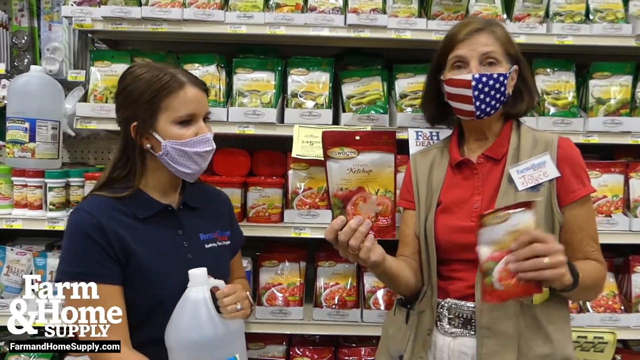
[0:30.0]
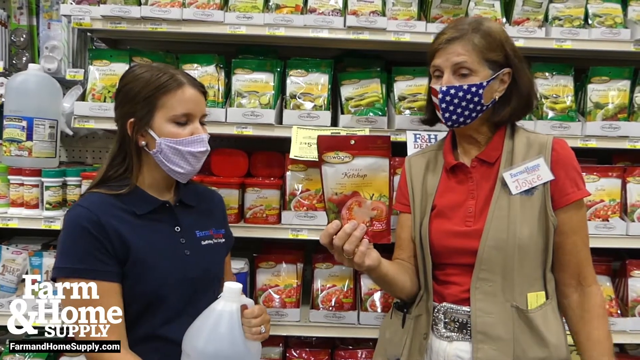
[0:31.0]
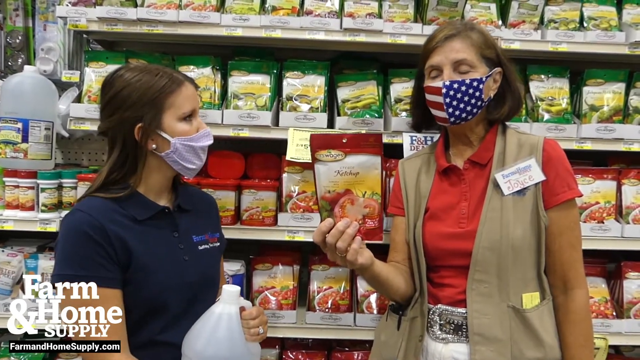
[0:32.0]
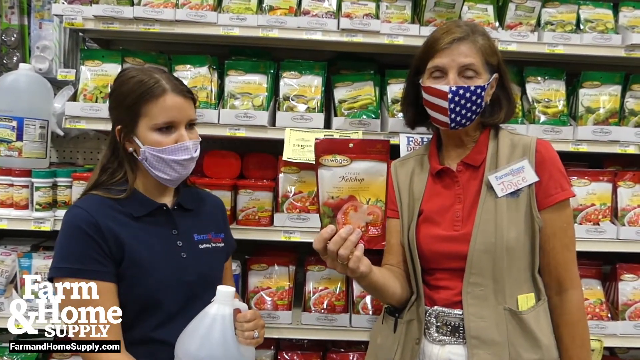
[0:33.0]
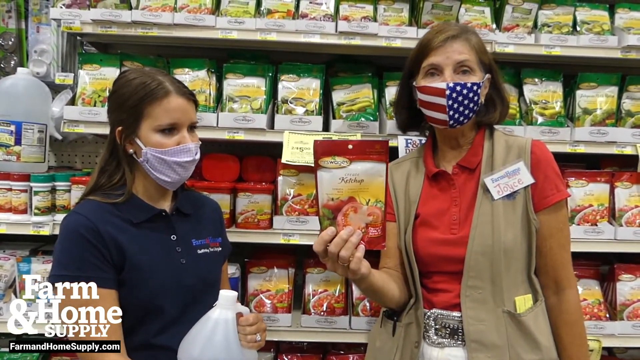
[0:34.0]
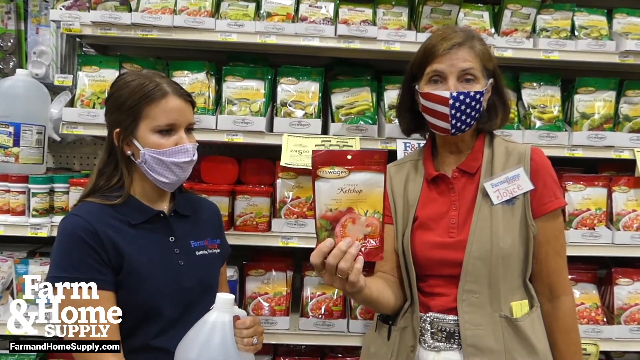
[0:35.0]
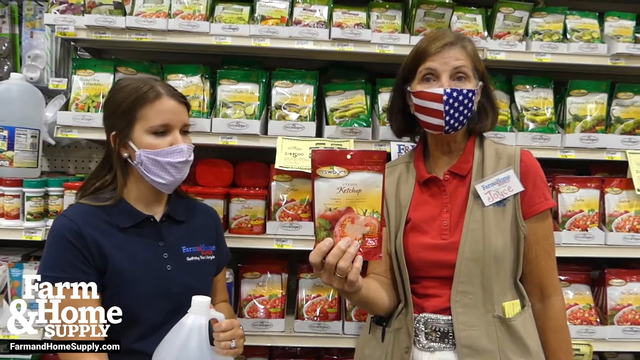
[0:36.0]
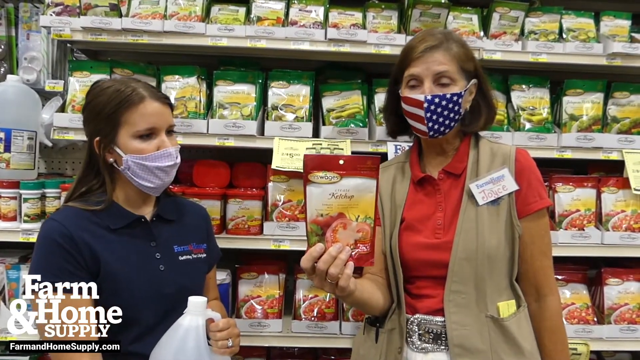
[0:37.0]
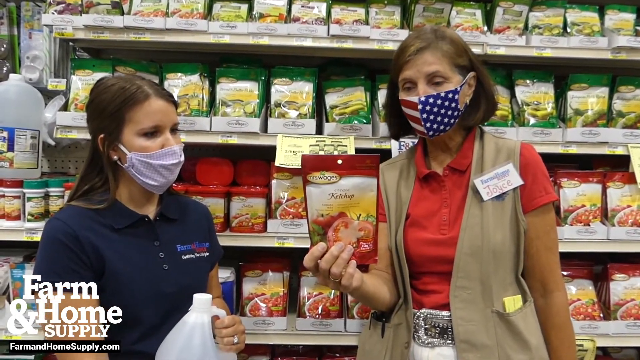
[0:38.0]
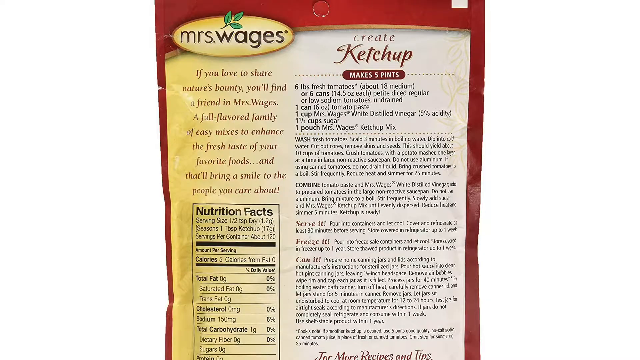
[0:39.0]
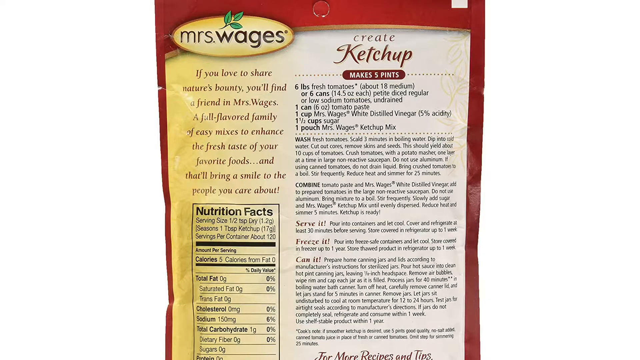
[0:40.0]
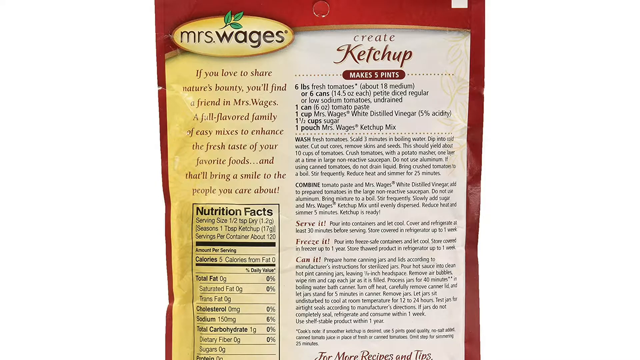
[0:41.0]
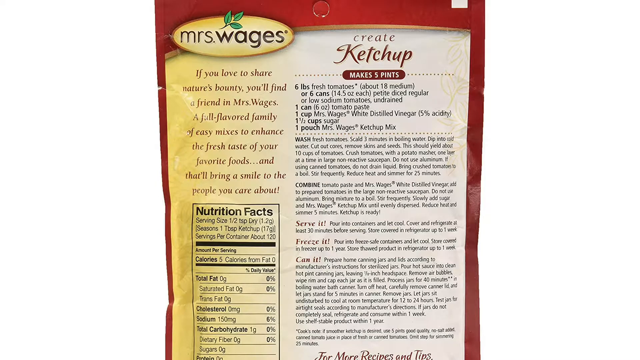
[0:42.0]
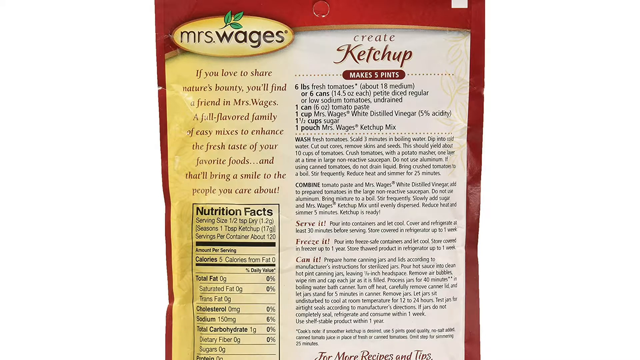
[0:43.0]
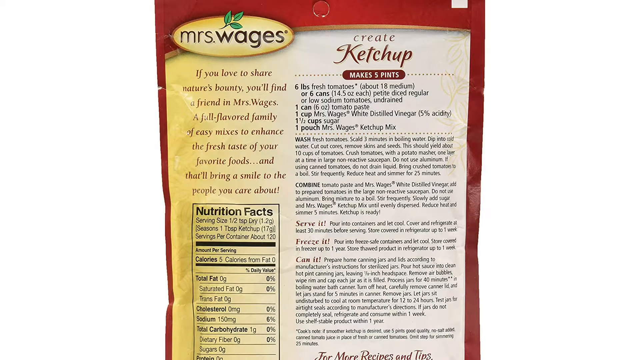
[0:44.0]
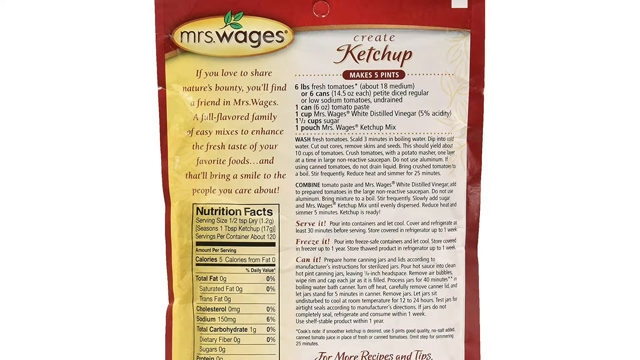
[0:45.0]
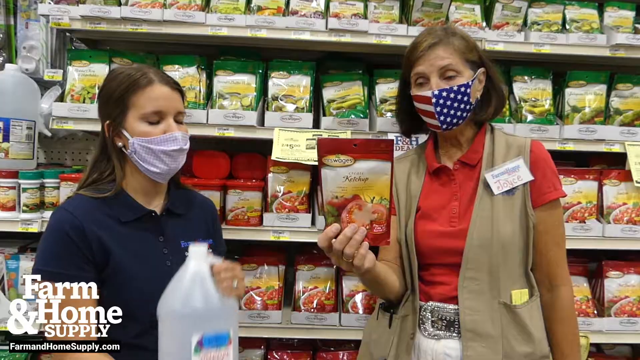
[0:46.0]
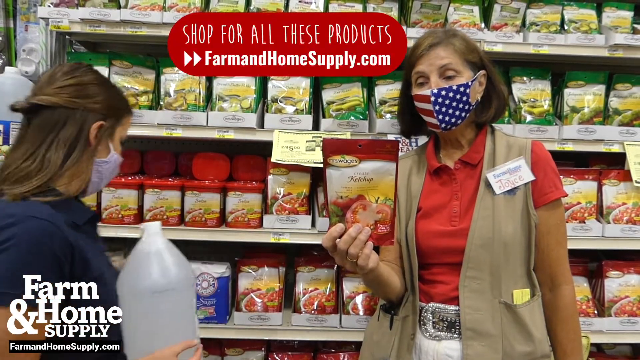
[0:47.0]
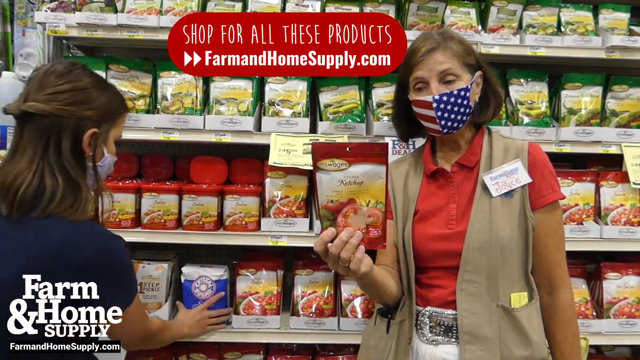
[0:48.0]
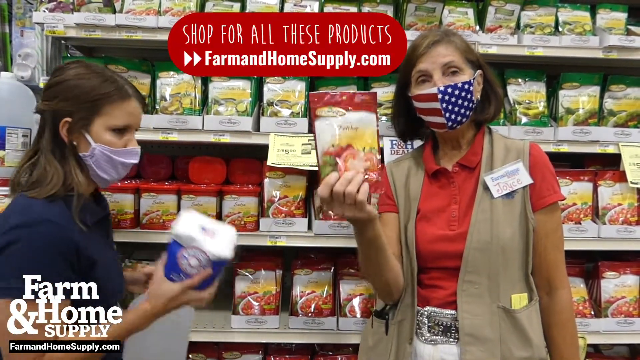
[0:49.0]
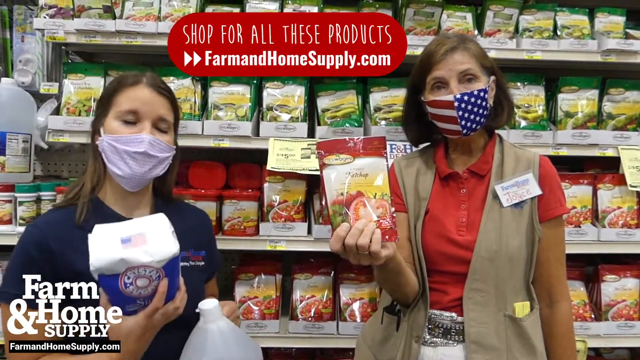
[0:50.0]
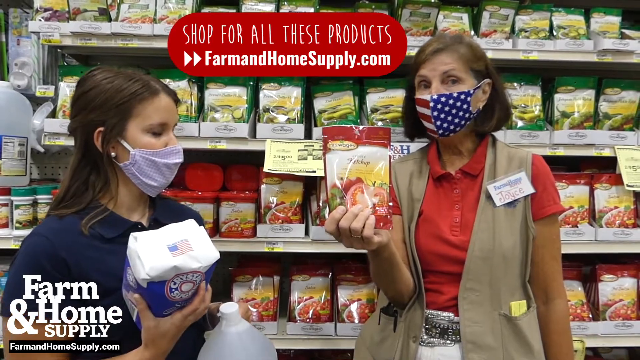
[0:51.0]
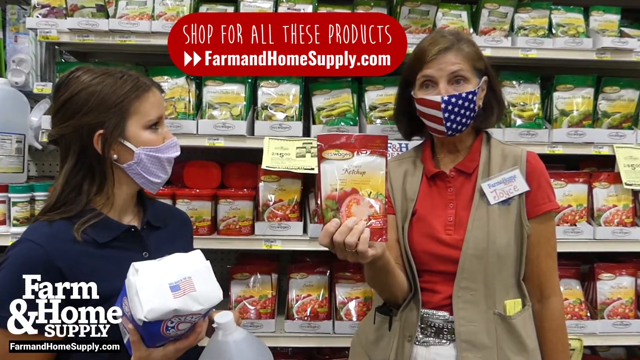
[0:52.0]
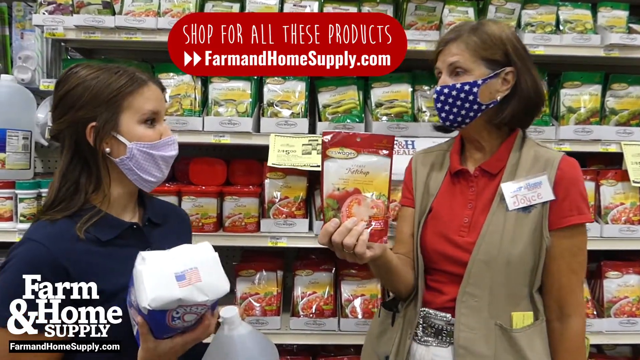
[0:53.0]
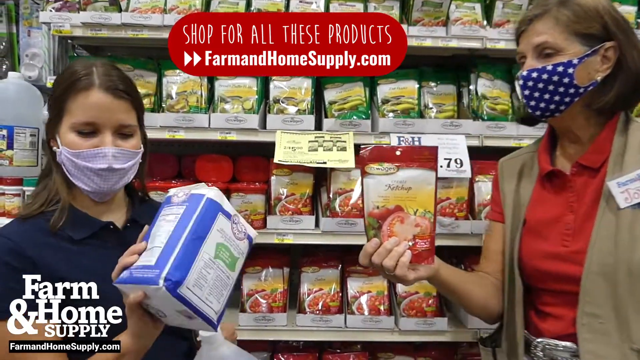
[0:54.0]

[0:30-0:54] Two women are in the aisle of a grocery store. An older woman wearing an American flag mask holds up a package of ketchup mix, and a younger woman stands beside her holding a jug of clear liquid. The older woman appears to speak toward the camera while holding up the mix, and the younger woman occasionally looks over at the camera as if in surprise. The back of the package is shown; it is called Mrs. Wages, and on the right is a recipe to create ketchup, along with nutrition facts and more. The younger woman is shown holding what is now revealed to be vinegar, and she reaches with her right hand for an additional item on the shelf behind them. A banner at the top says "shop for all these products" and gives a URL. The younger woman looks at the older woman, and they both say something to each other.